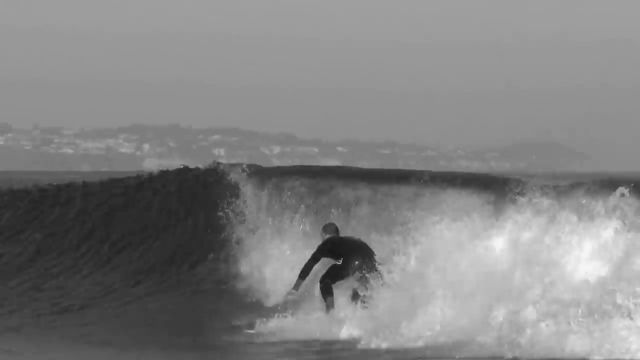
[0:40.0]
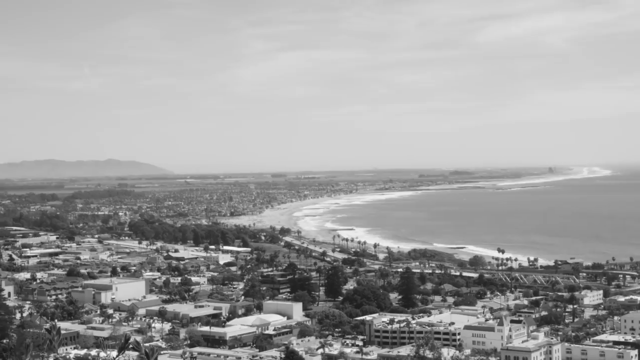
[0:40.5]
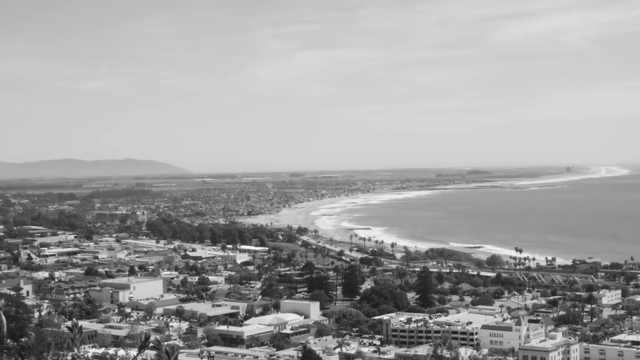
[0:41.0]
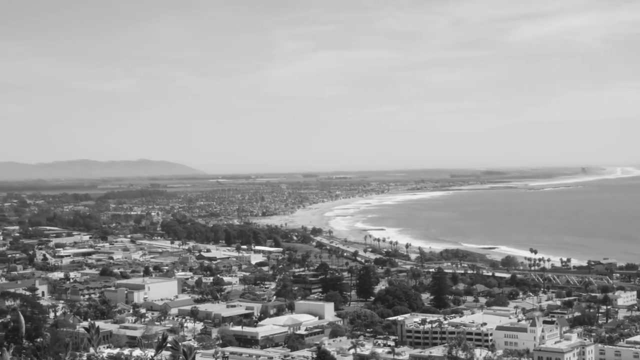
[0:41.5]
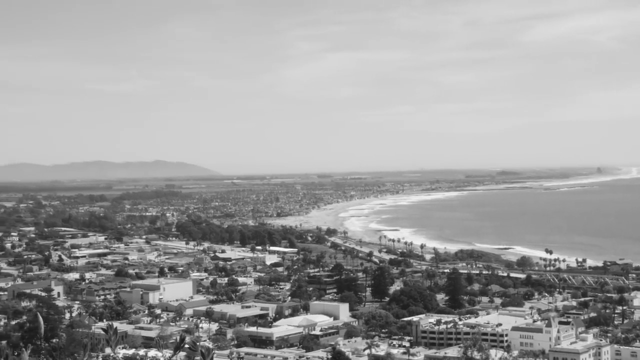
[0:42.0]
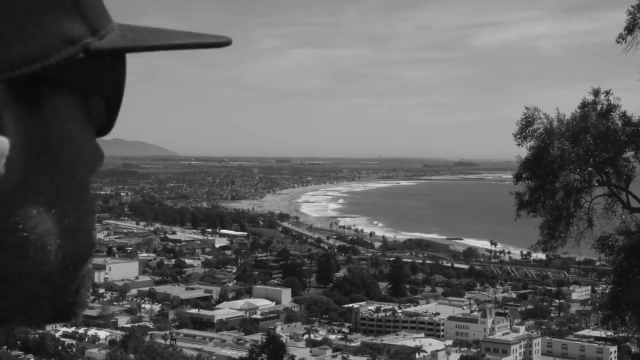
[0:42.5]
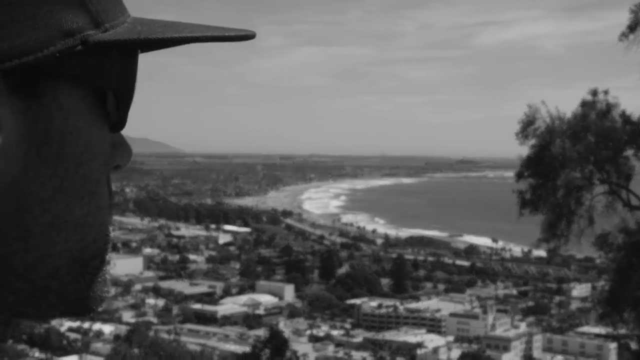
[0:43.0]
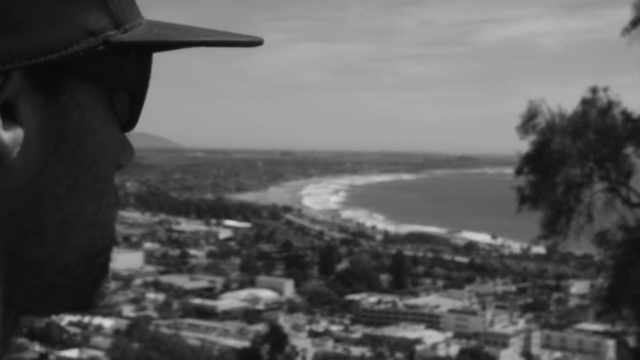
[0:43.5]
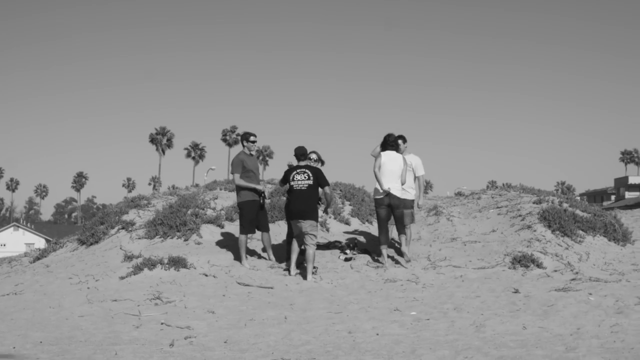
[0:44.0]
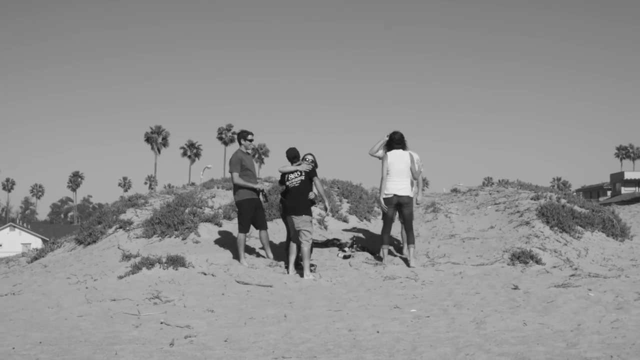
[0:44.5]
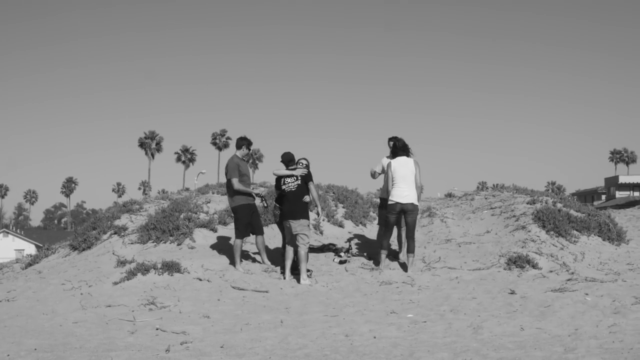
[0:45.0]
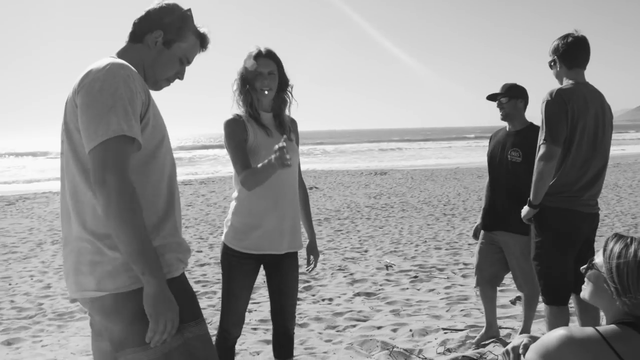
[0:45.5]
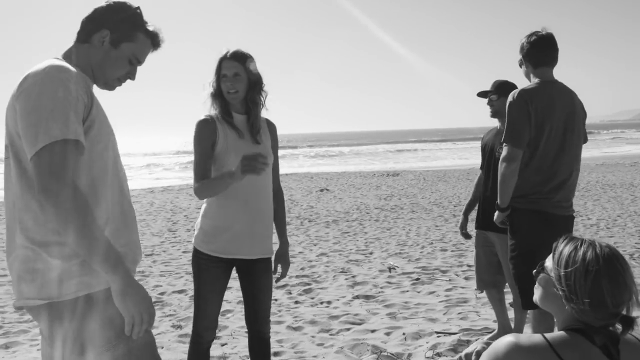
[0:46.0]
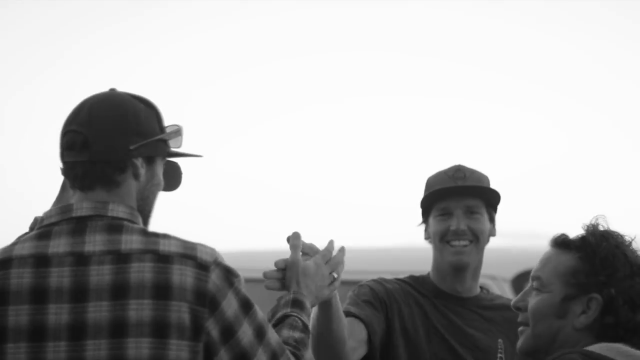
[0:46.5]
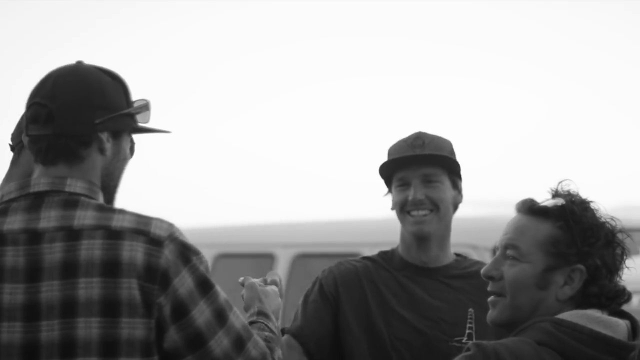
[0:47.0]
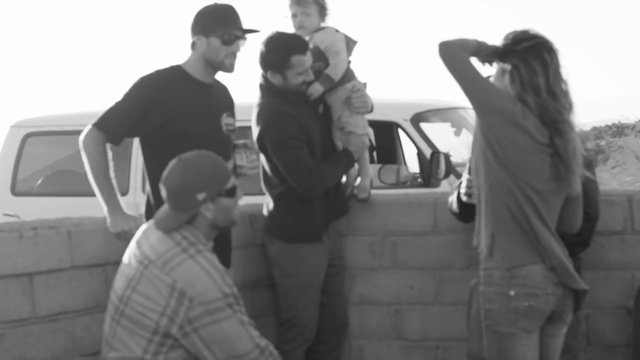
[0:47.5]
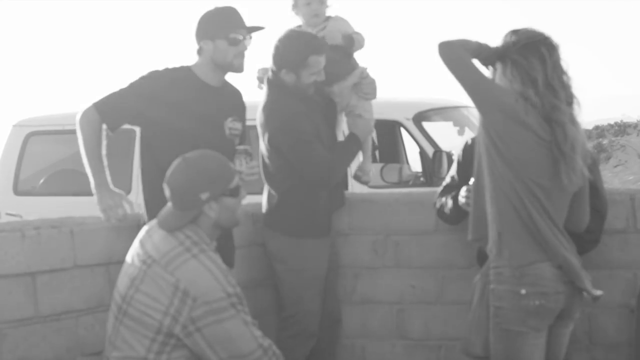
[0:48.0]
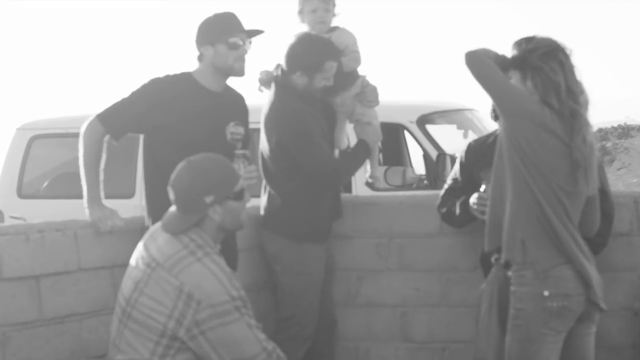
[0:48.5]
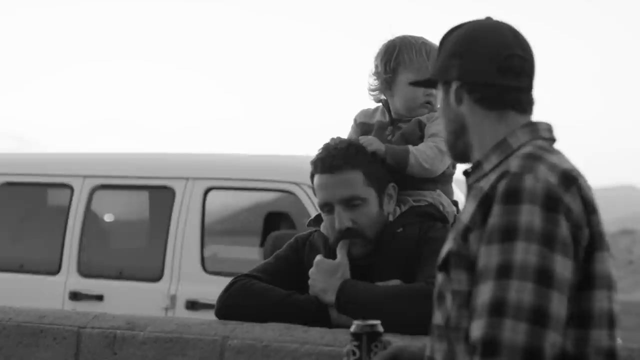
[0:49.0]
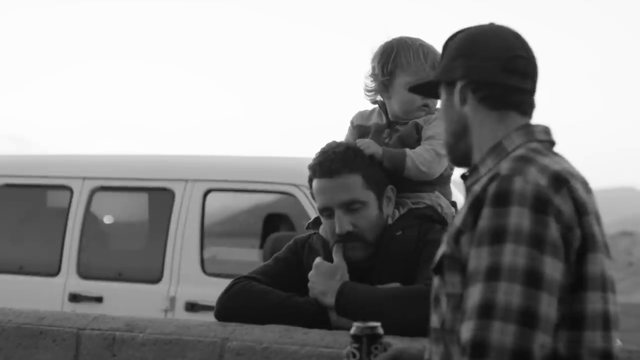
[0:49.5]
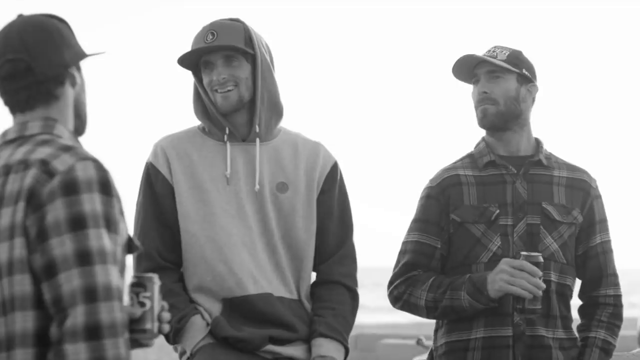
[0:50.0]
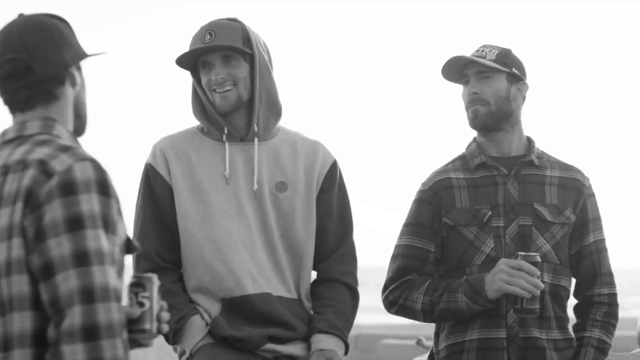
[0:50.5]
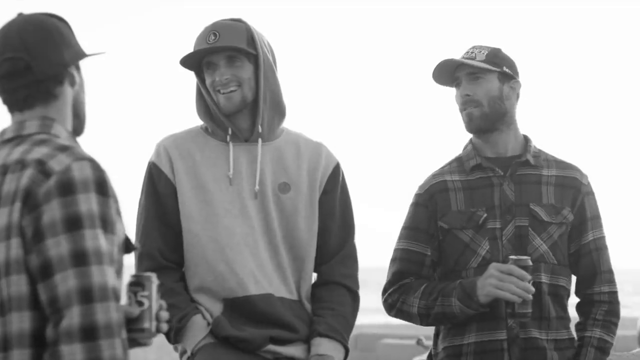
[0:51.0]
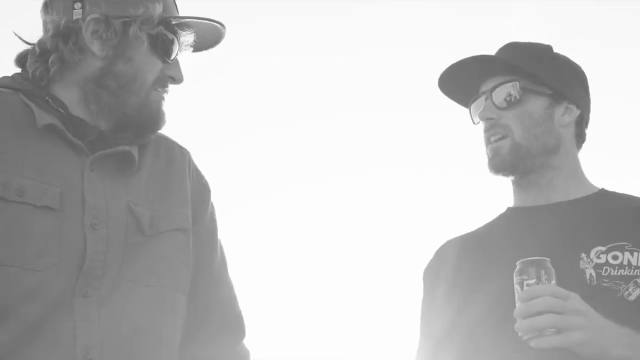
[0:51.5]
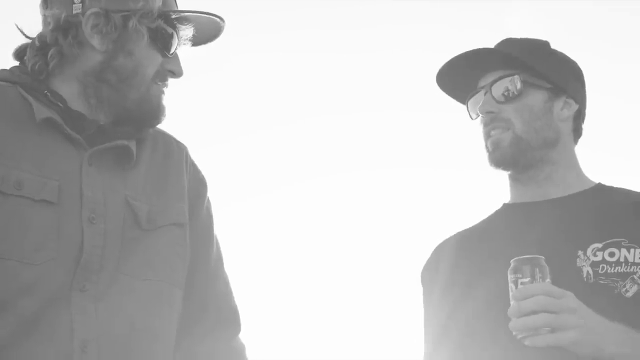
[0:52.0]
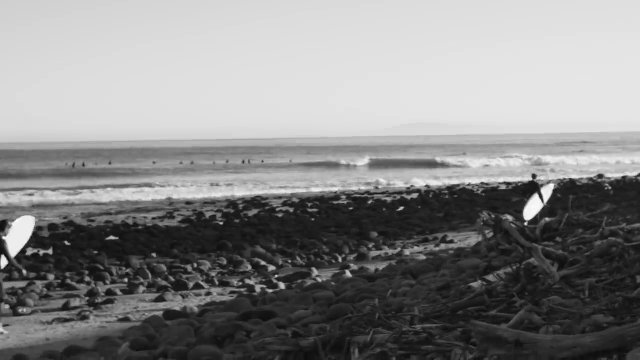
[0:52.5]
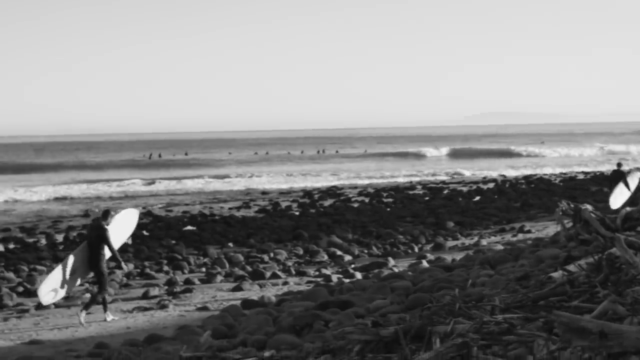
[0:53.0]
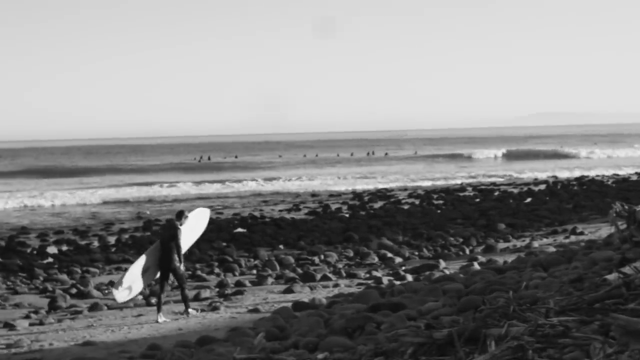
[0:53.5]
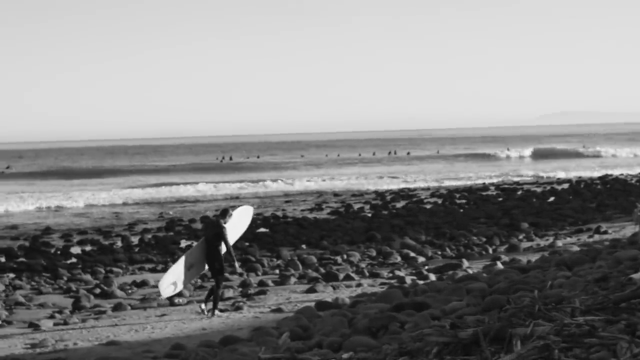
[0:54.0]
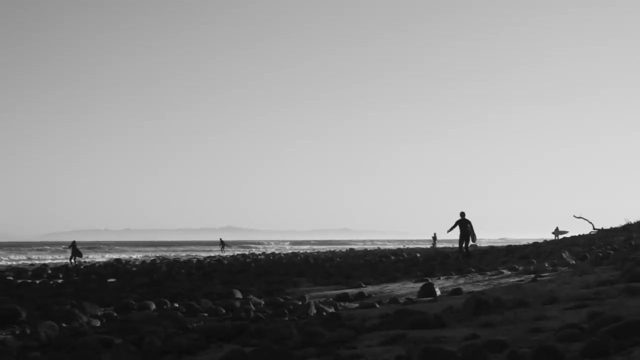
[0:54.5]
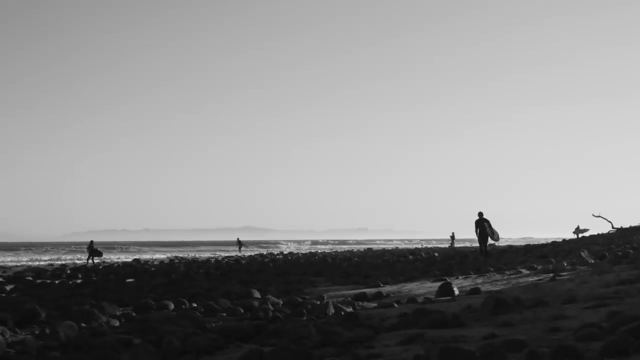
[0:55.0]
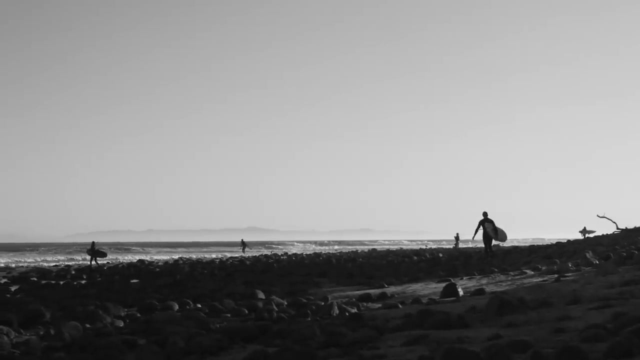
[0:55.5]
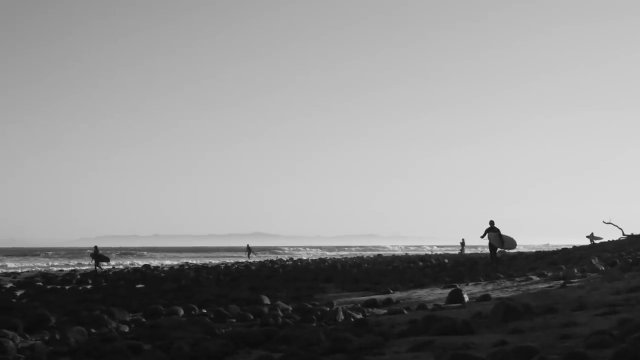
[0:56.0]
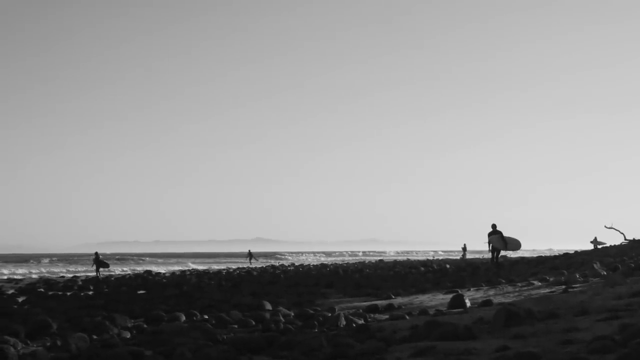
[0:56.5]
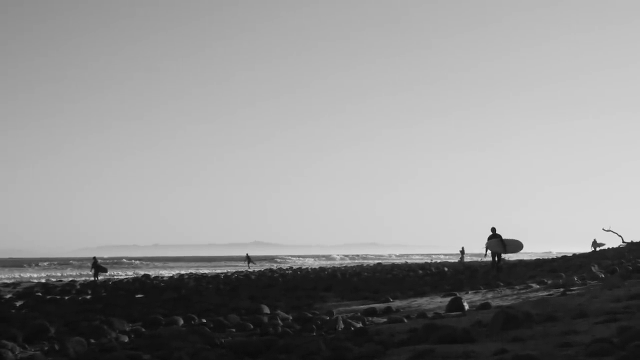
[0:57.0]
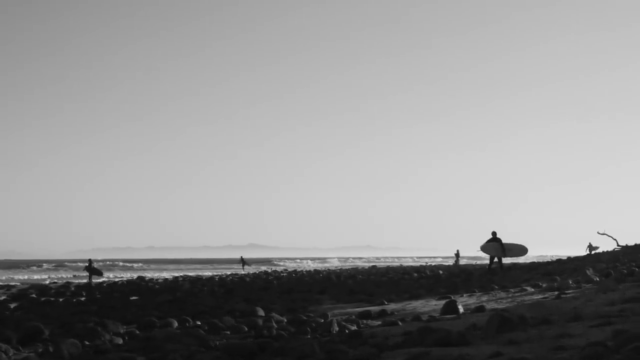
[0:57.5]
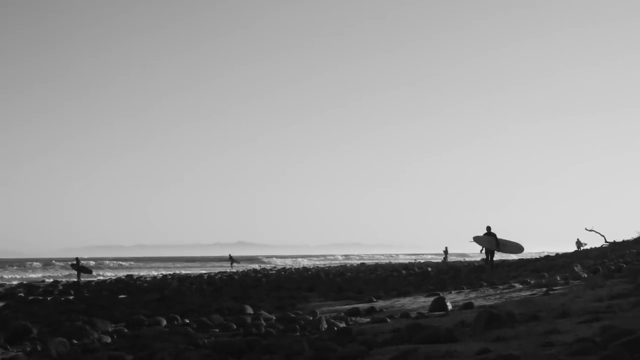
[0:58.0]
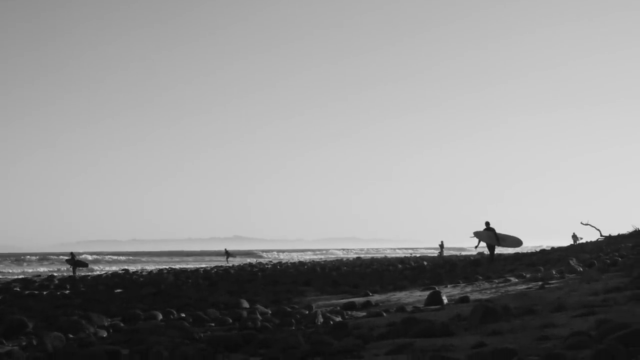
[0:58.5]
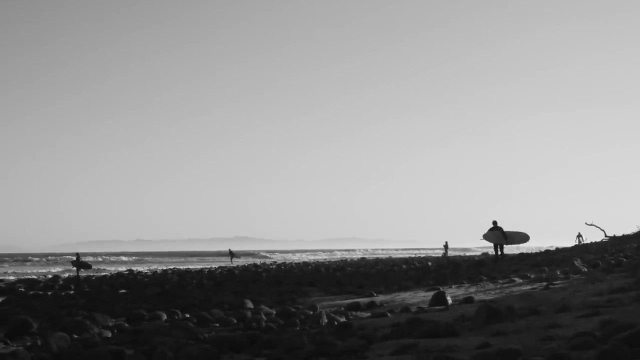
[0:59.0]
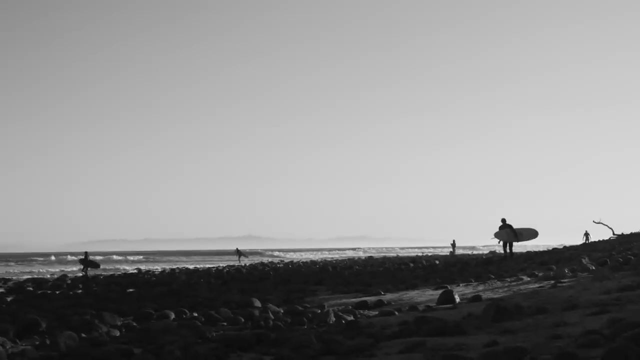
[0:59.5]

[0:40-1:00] A man rides a wave at a beach. In the far distance, several miles away, low hills with houses on them line the shore. In the foreground the man, in a dark black wetsuit, rides a wave about six feet tall on a surfboard with his left foot forward. Drone footage shows a curl in the shore with numerous houses and trees, mountains in the distance, and large sections of sand. Up close, the man has the camera right behind him on the right, so his face is on the left side of the frame. He wears a baseball cap and a pair of sunglasses, and has a beard and mustache grown about half an inch long, with the surf in the far distance. Then the shore with sand dunes appears, with five people on it, several males and some females, hugging. Most wear shorts, though one woman wears jeans and a white shirt. The same five people, three males and two females, stand together on the beach talking, and a couple of the guys shake hands. Five people are in front of a three-foot wall, one of them sitting; the guy in the middle holds a baby and sets it on the wall. Behind them are a van and the sand dunes. Multiple scenes show the same people standing around talking, all wearing baseball caps, three guys hanging out and chatting on the beach, drinking a can of beer with the 805 logo visible on the side of the can. Other scenes show five or six different surfers walking along the beach out toward the water.